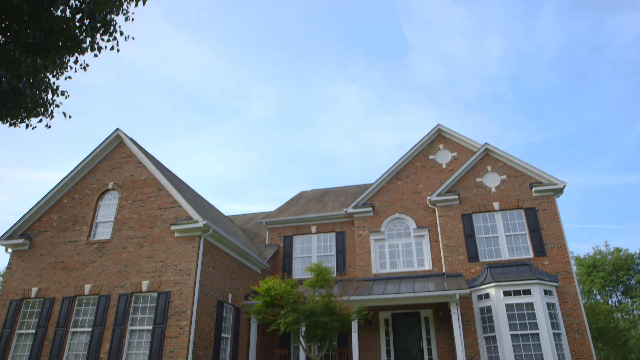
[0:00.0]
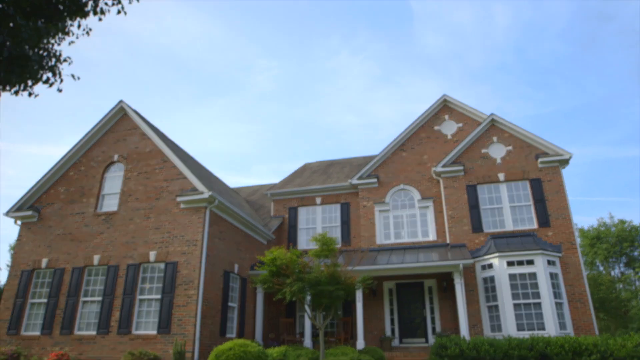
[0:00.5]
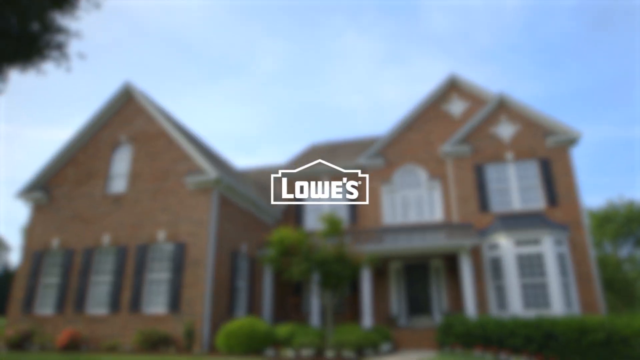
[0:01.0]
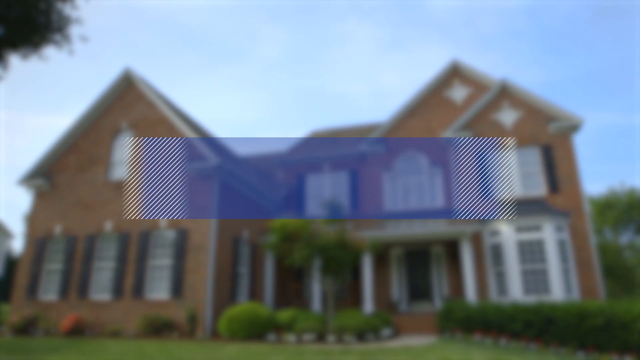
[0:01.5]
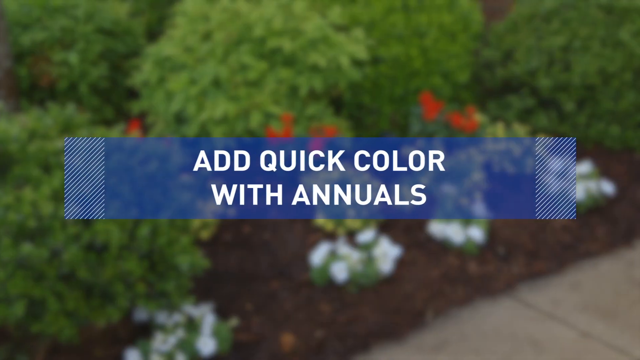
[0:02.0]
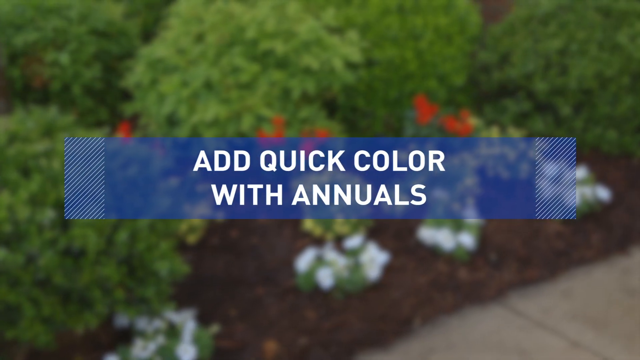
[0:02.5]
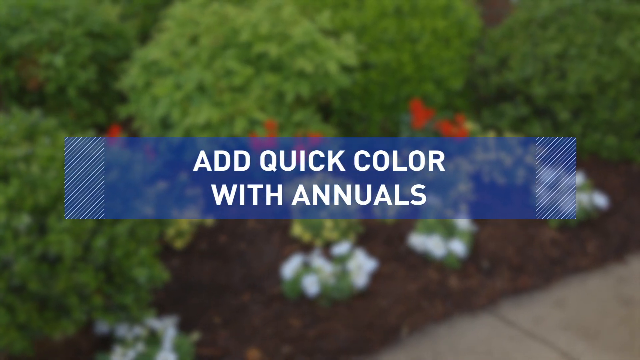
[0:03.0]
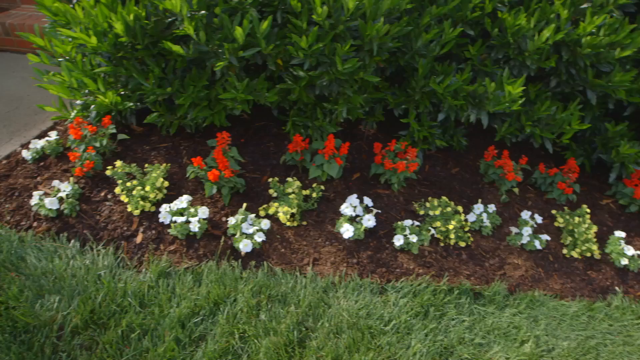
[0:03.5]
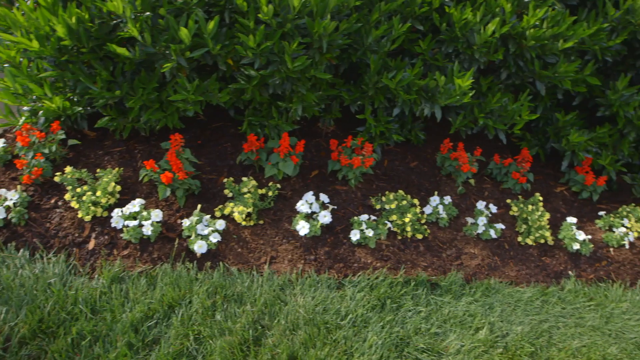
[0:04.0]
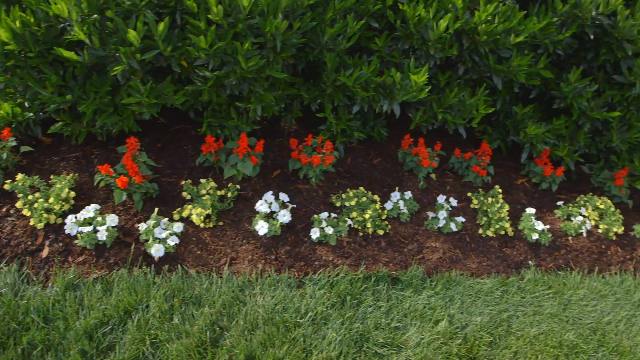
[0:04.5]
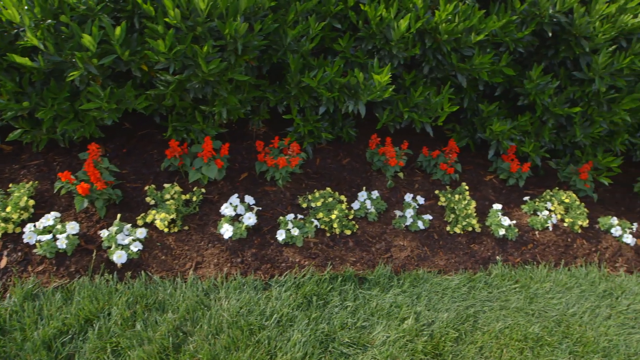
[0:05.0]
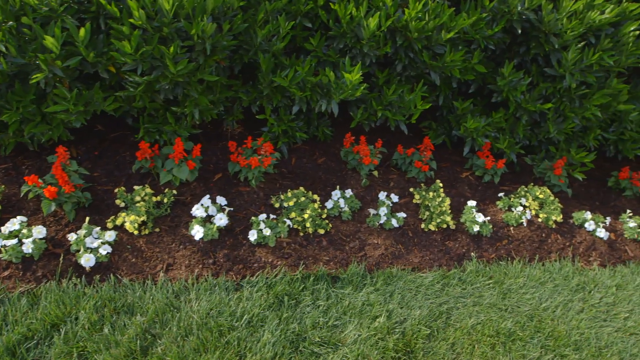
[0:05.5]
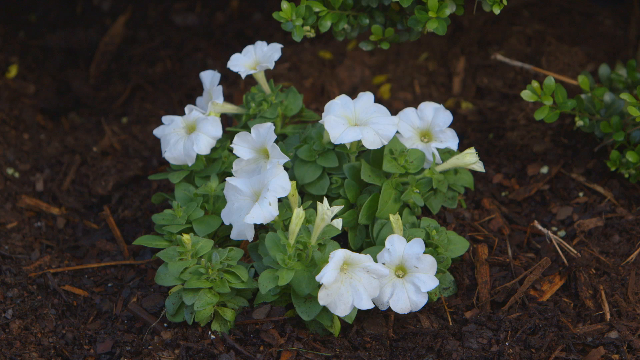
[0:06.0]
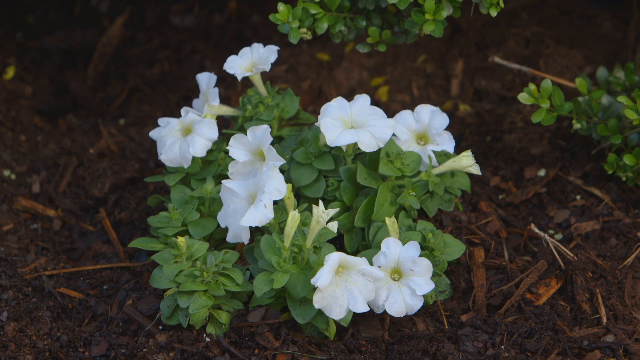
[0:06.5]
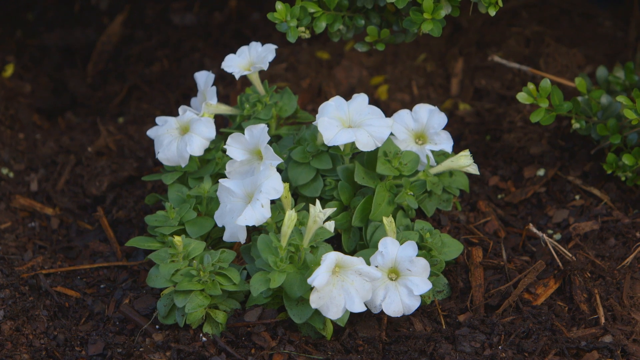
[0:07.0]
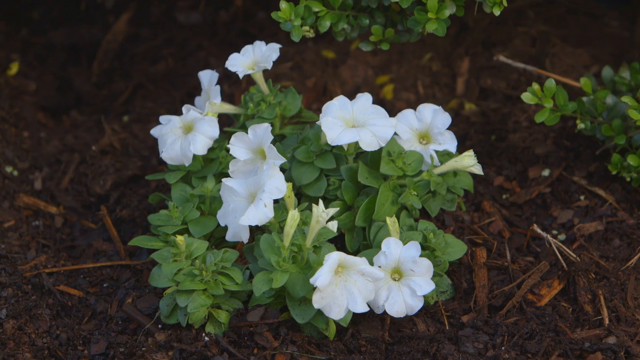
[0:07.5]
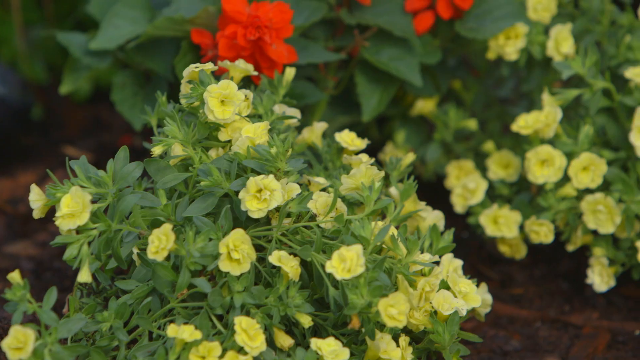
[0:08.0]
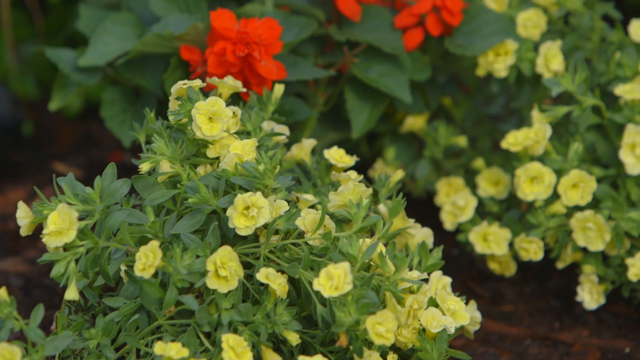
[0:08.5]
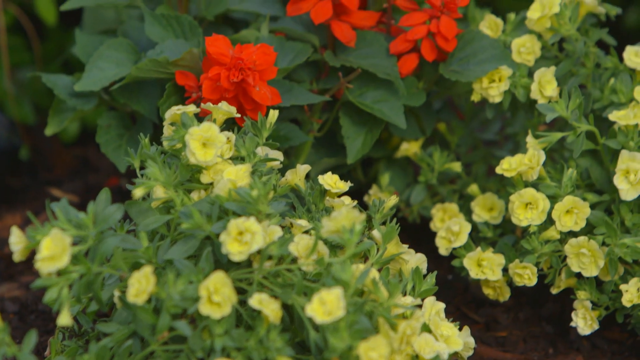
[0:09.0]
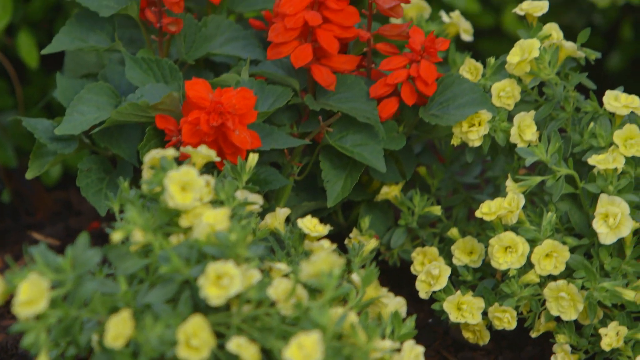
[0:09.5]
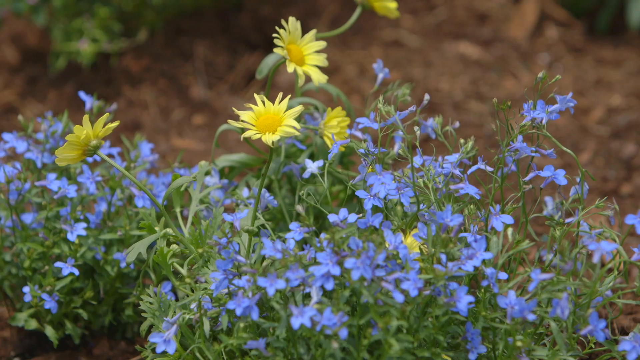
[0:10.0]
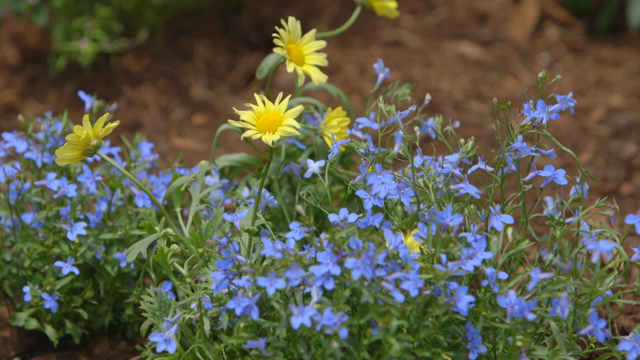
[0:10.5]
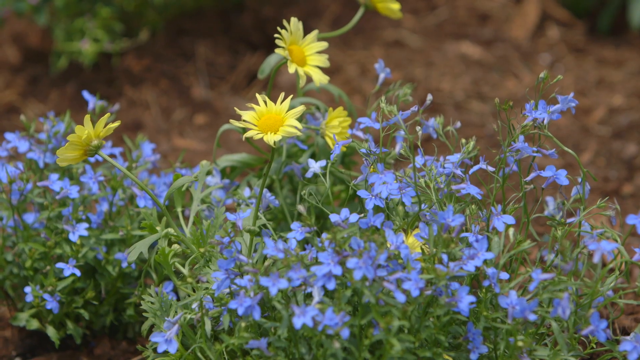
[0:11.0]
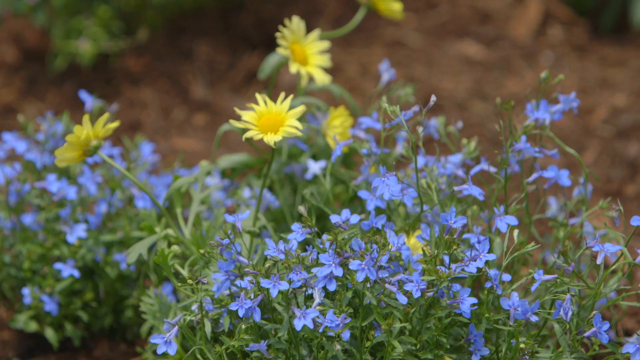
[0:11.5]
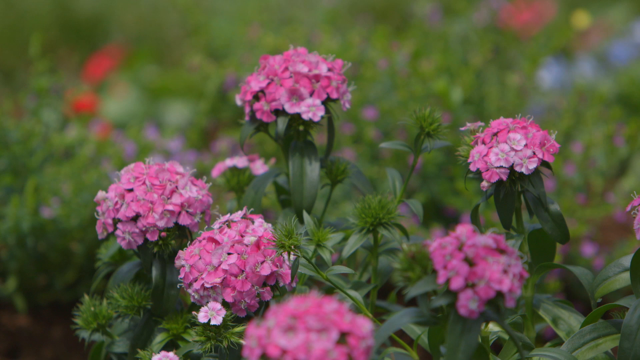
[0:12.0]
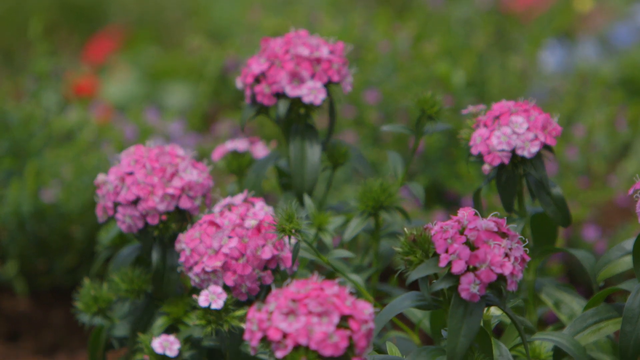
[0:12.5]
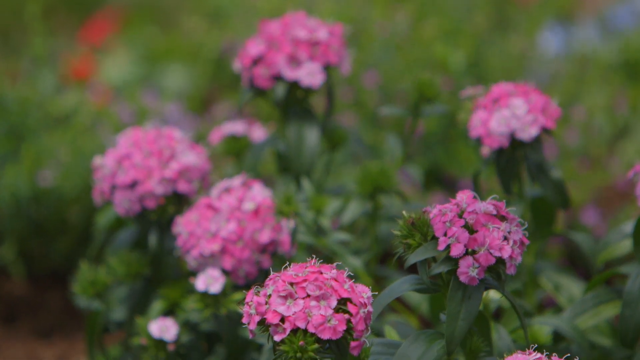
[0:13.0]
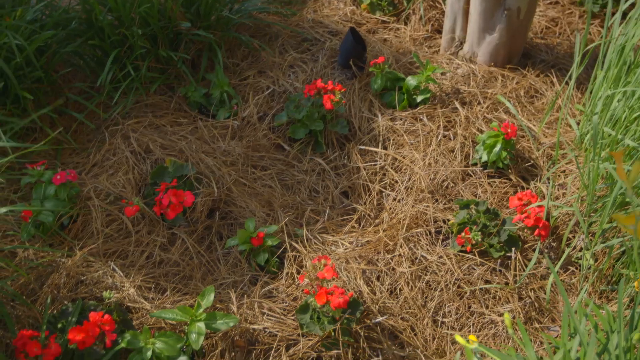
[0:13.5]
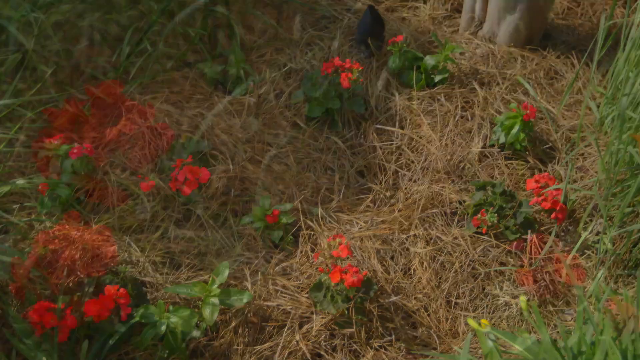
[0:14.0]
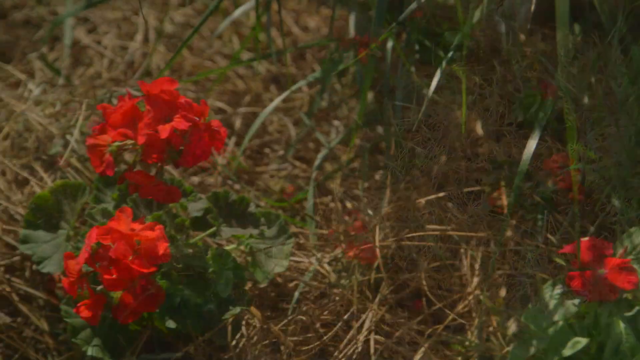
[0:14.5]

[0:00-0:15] The video begins with an outside view of a two-story house on a sunny day. The camera pans down slightly, and the video becomes a little blurry as the Lowe's company logo appears in the center of the screen for a brief moment. This transitions to a caption that says "Add quick color with annuals," behind which is a blurred background with dirt, plants and what looks like red flowers. After a few seconds the background is no longer blurry, showing flowers planted in dirt from a slightly overhead view. The camera pans from left to right to some white flowers. Many yellow flowers and some red flowers are shown next, followed by small purple flowers with some yellow flowers, and then groups of pink flowers. After that come red flowers separated by what appears to be brown weeds or brown grass.